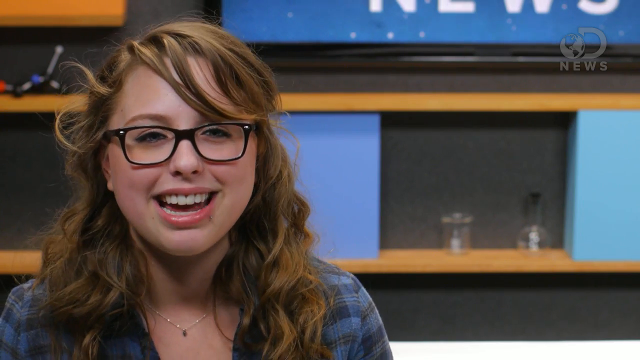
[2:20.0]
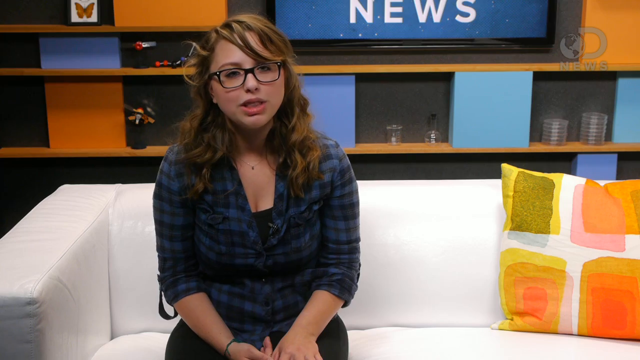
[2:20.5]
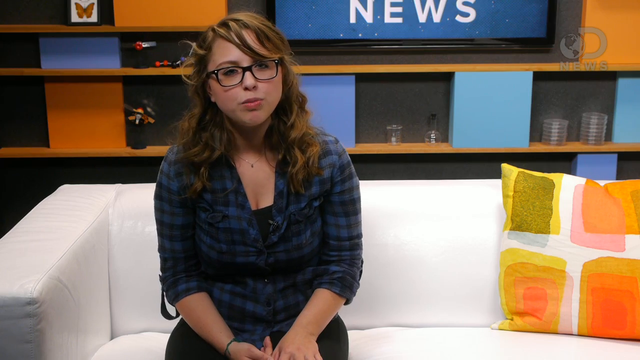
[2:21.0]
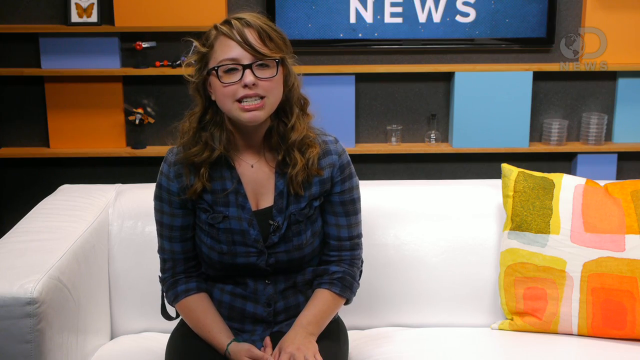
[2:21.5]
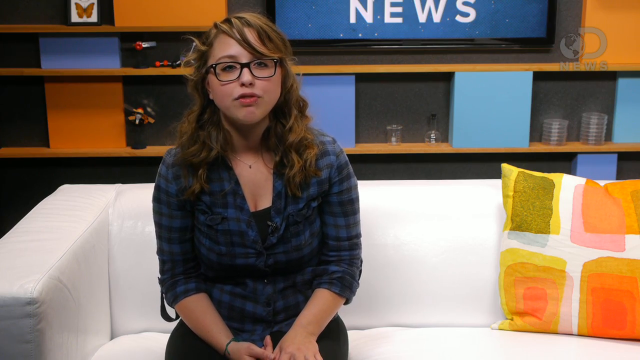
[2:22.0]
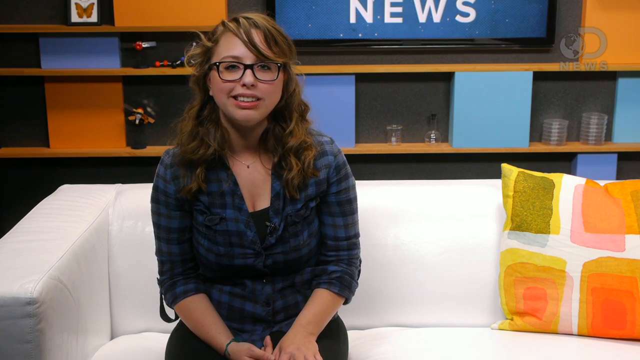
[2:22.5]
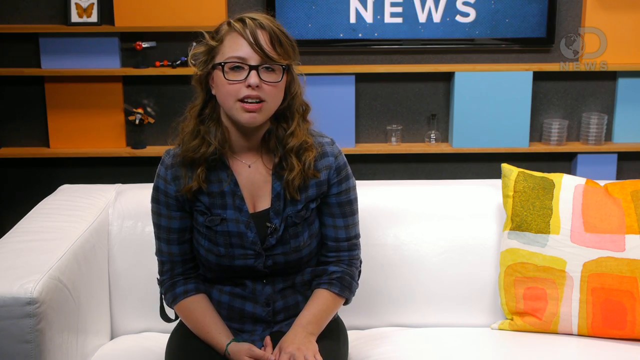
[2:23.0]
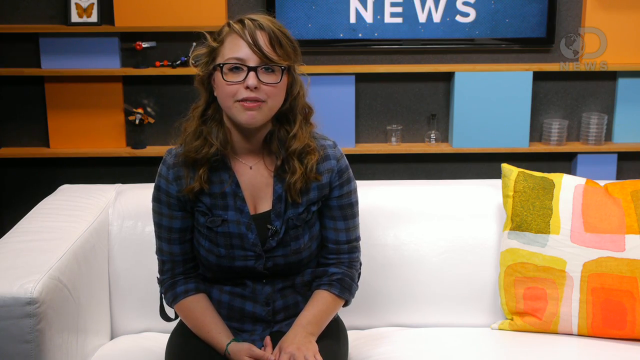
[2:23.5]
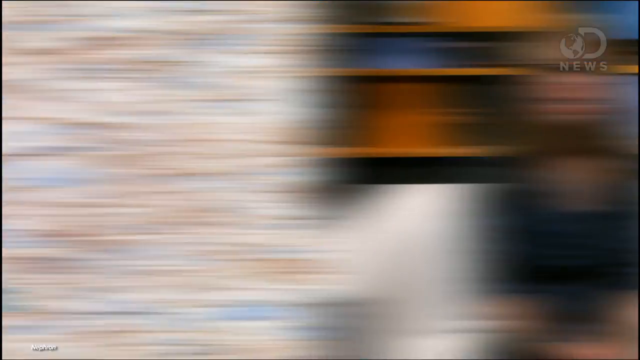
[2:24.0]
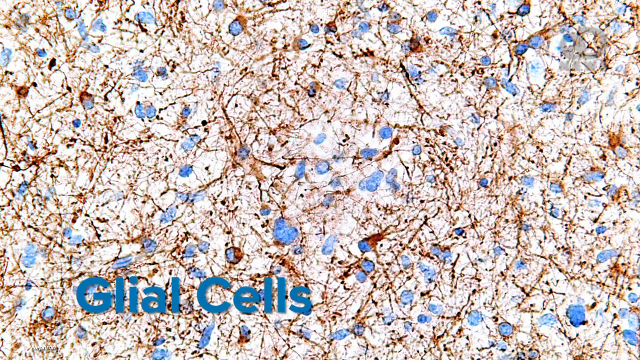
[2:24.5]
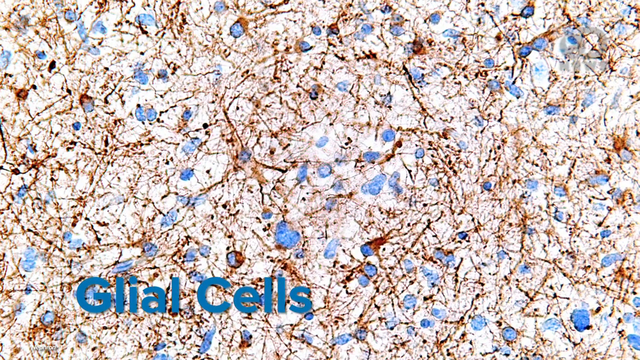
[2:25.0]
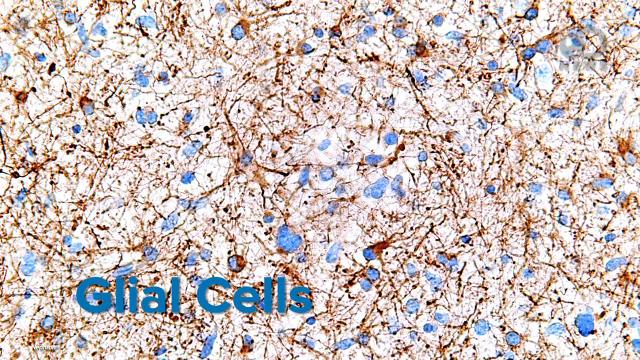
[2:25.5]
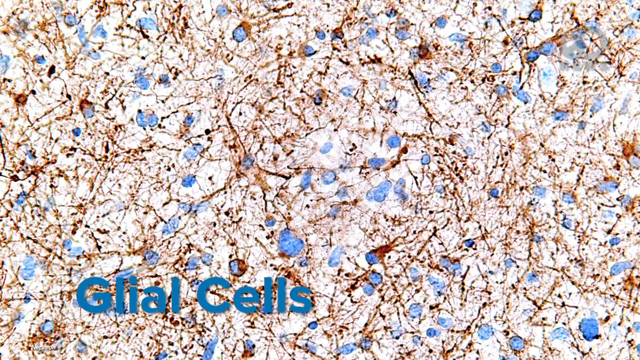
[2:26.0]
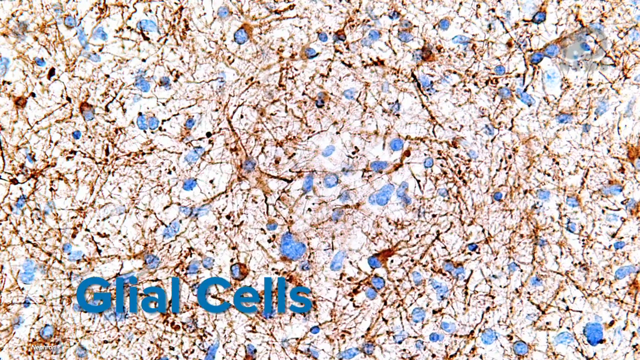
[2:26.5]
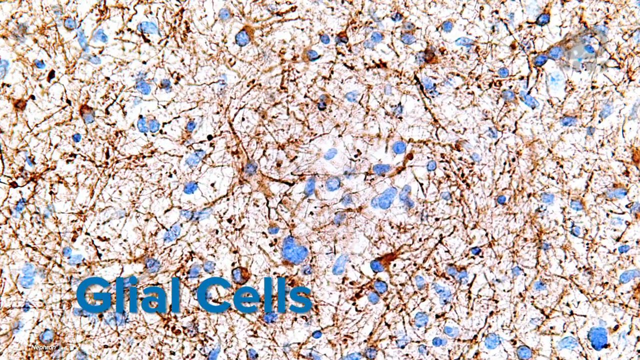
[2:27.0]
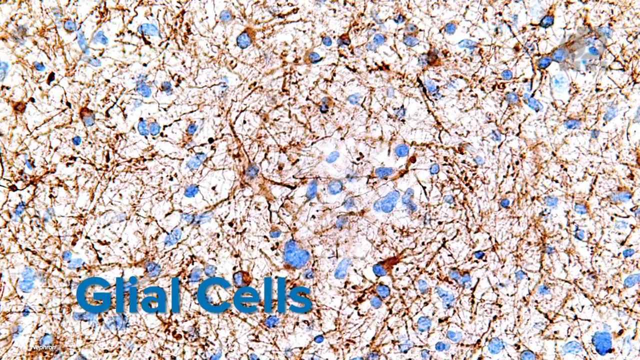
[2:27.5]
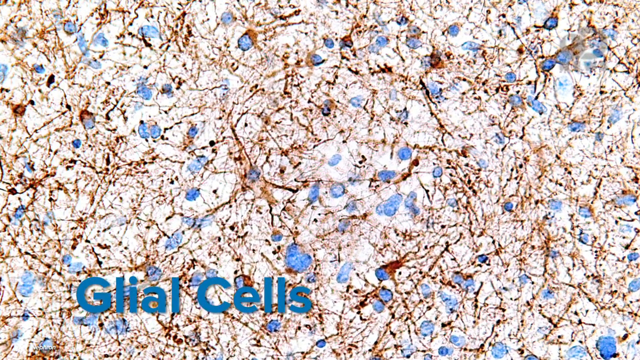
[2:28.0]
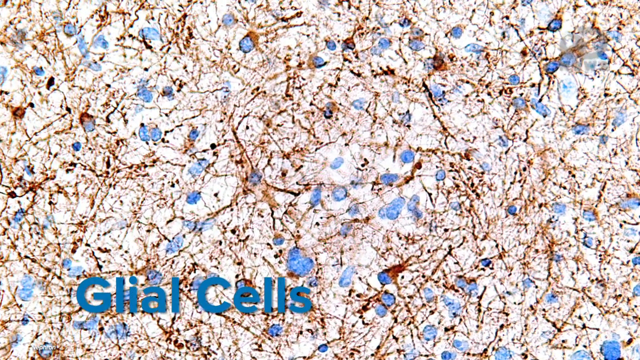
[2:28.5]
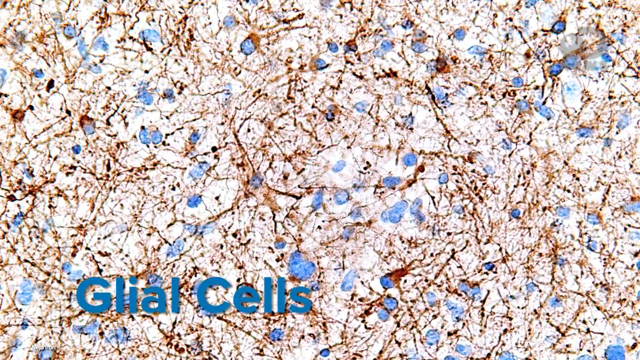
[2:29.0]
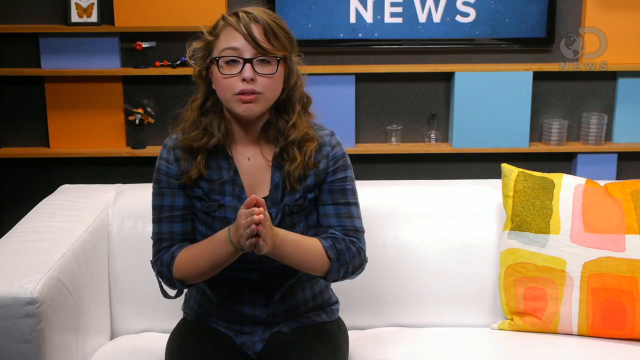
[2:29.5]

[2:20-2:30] A woman sits on a white couch with a colorful pillow in the background and "news" off to the side of her, wearing black-rimmed glasses and smiling as she talks. Glial cells fill the whole picture: a white background with brown etching lines running through it and purplish blue dots of different sizes, not all circular but kind of oblong, some a little brighter and some a little translucent. It looks almost as if a microscope was used to zoom in on them.